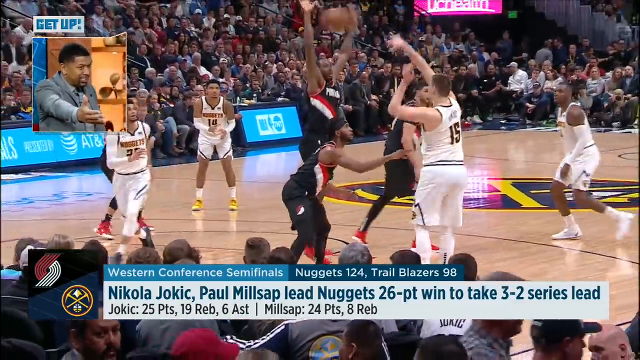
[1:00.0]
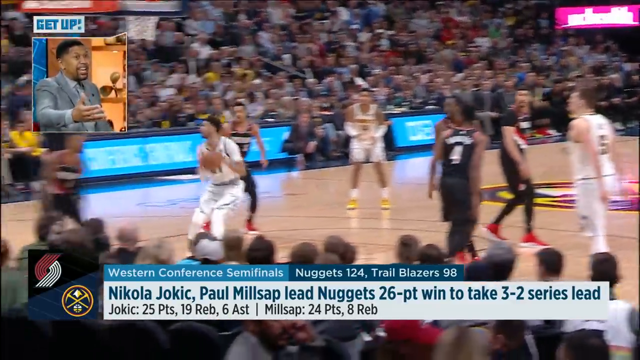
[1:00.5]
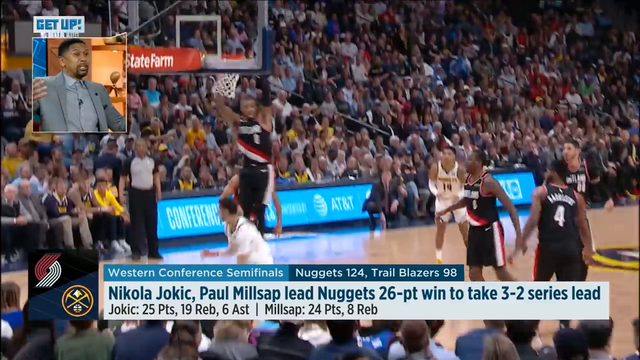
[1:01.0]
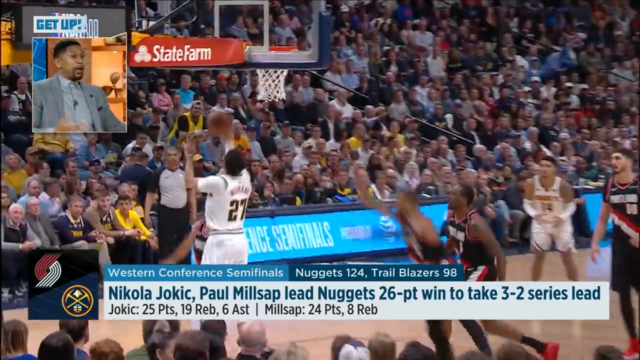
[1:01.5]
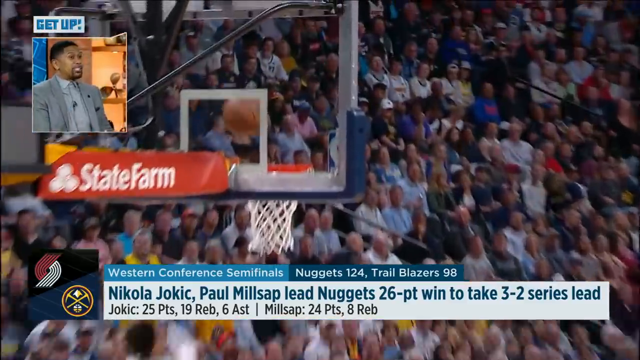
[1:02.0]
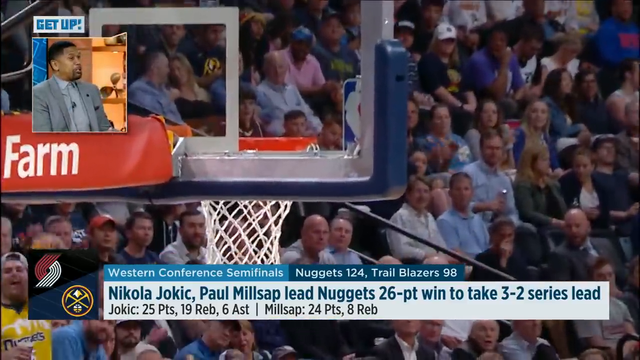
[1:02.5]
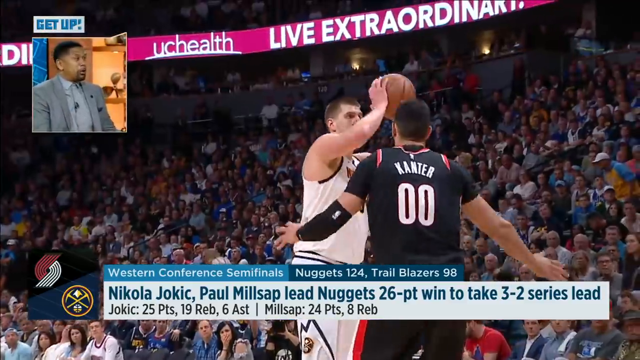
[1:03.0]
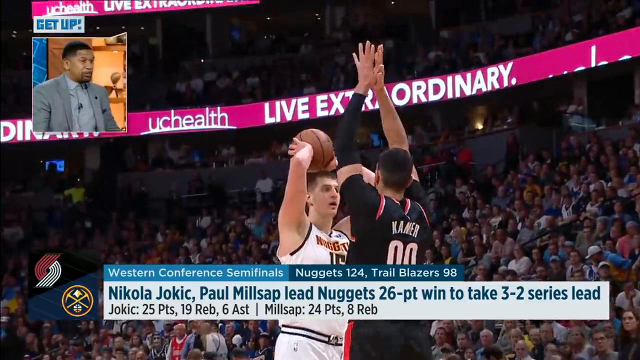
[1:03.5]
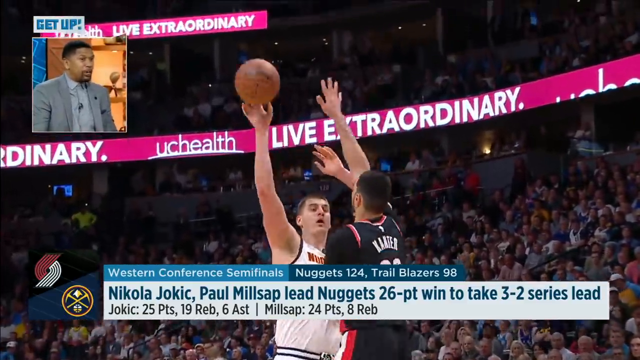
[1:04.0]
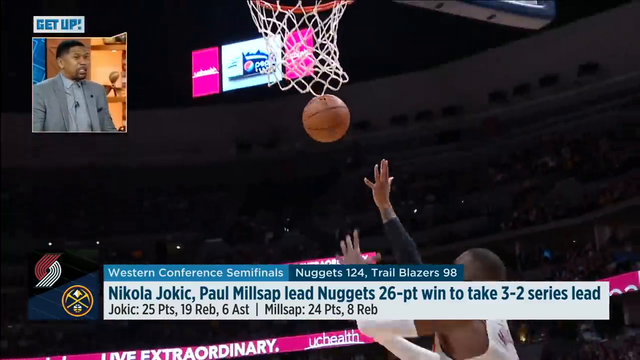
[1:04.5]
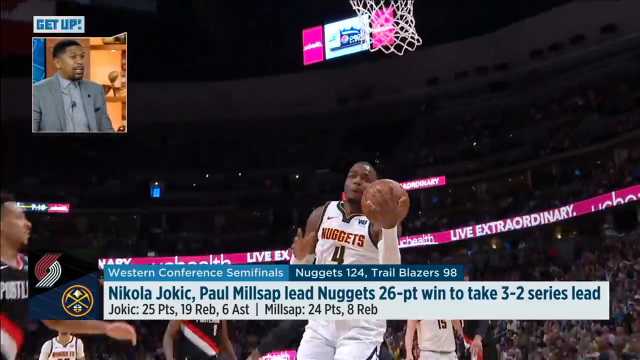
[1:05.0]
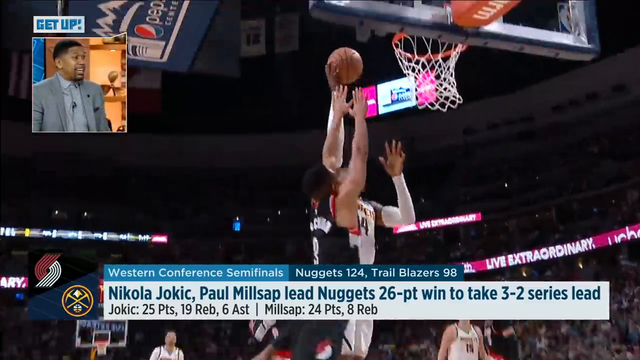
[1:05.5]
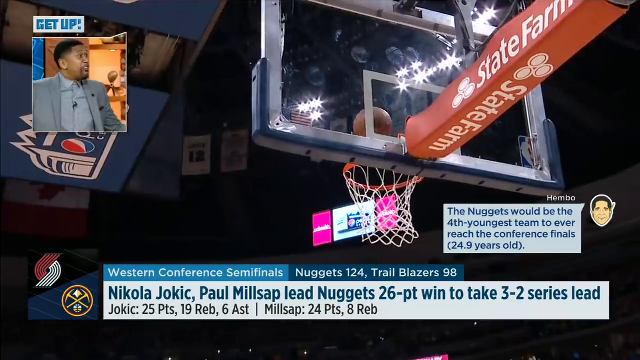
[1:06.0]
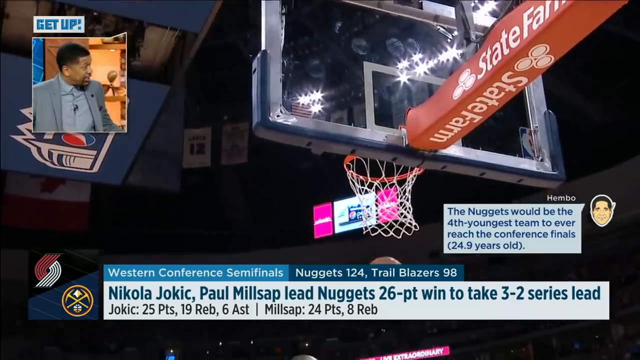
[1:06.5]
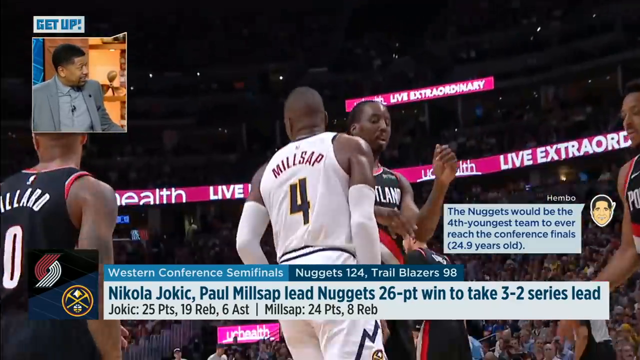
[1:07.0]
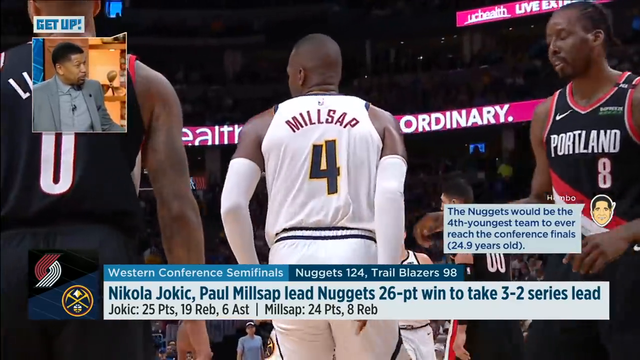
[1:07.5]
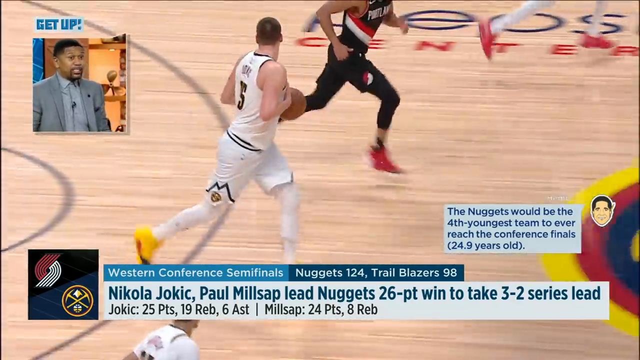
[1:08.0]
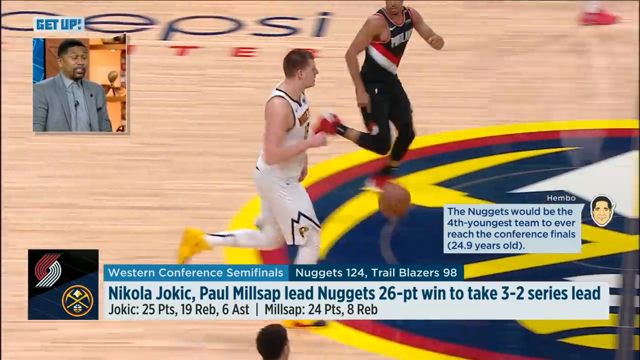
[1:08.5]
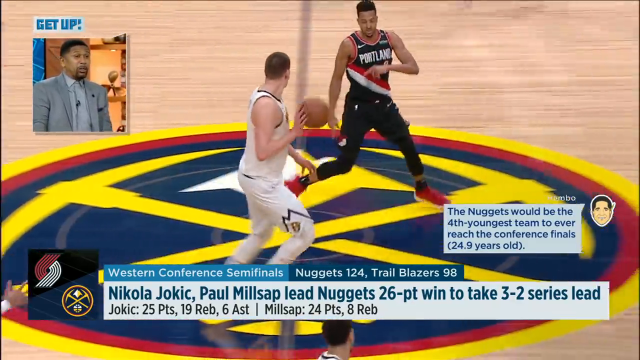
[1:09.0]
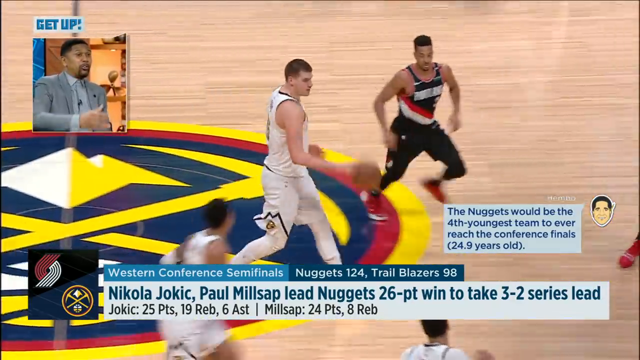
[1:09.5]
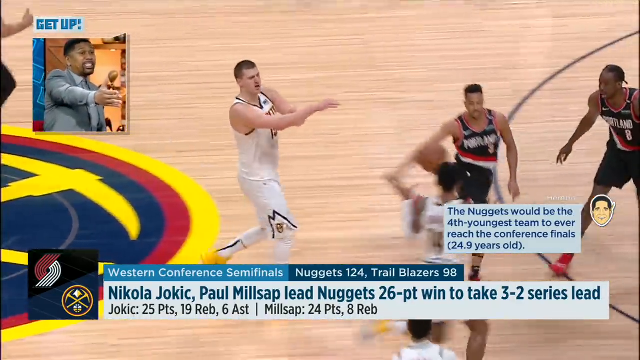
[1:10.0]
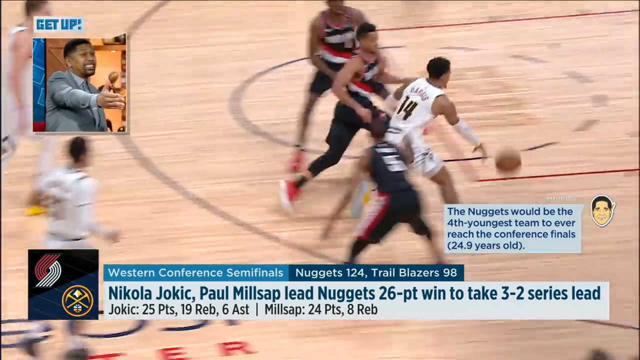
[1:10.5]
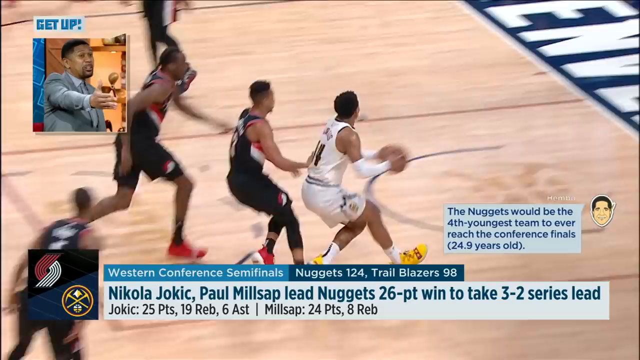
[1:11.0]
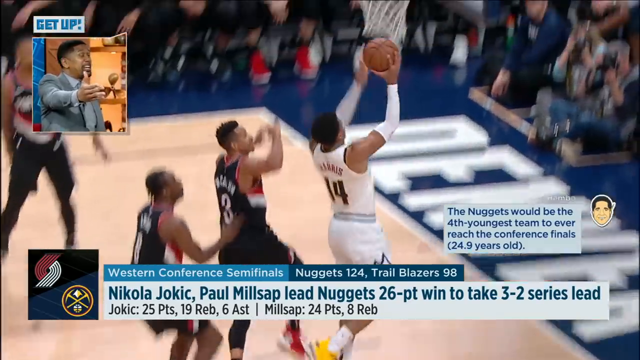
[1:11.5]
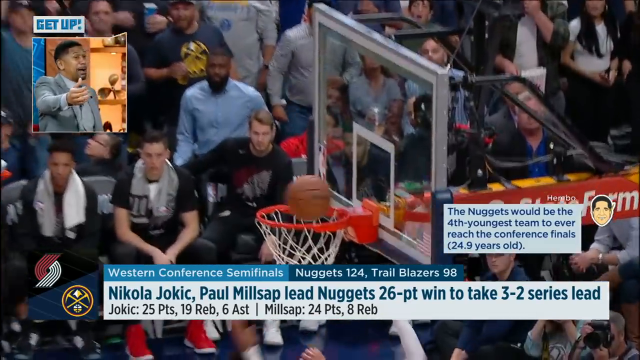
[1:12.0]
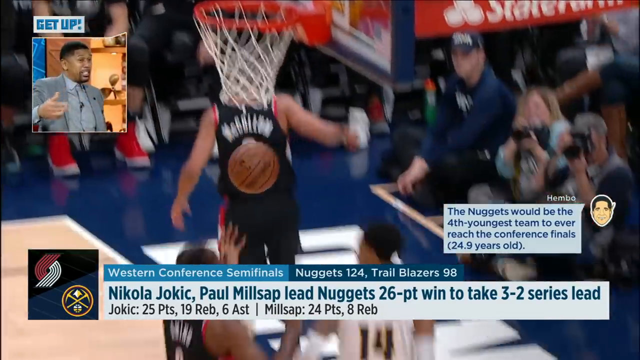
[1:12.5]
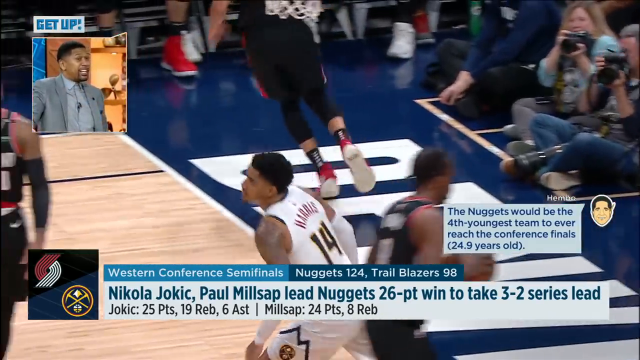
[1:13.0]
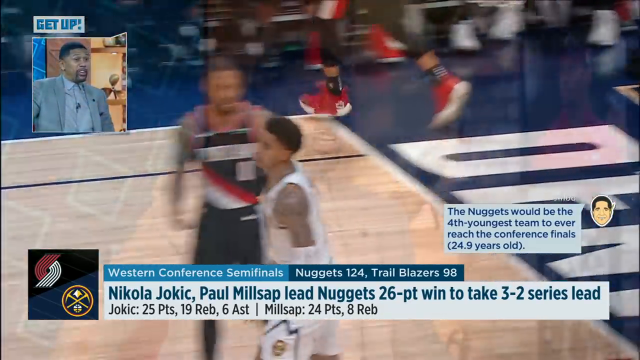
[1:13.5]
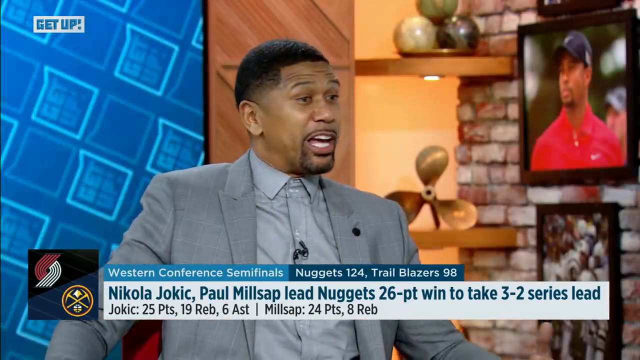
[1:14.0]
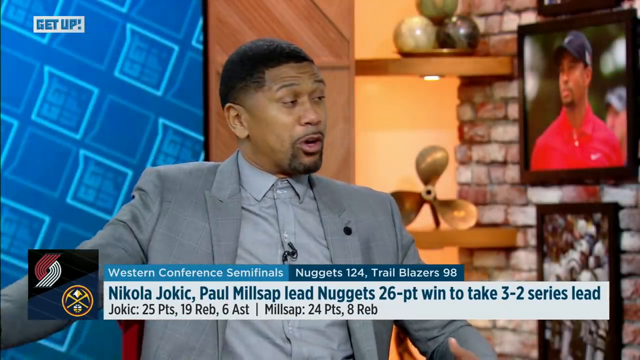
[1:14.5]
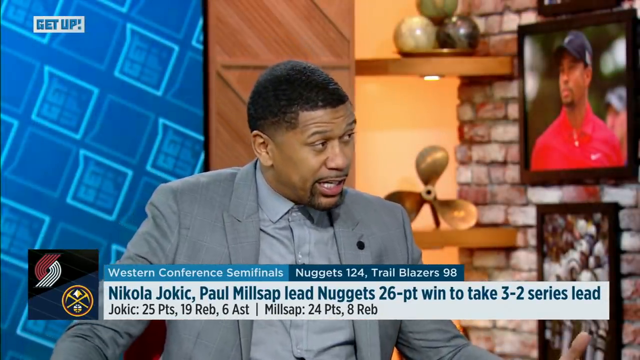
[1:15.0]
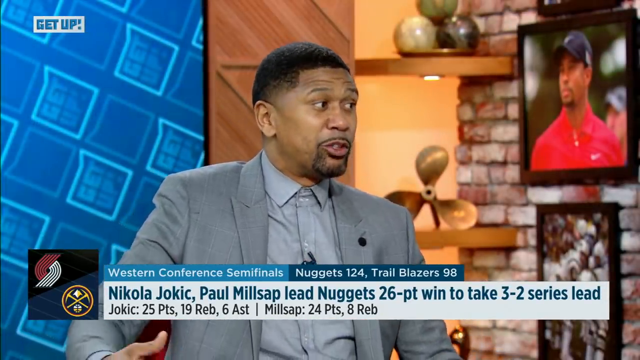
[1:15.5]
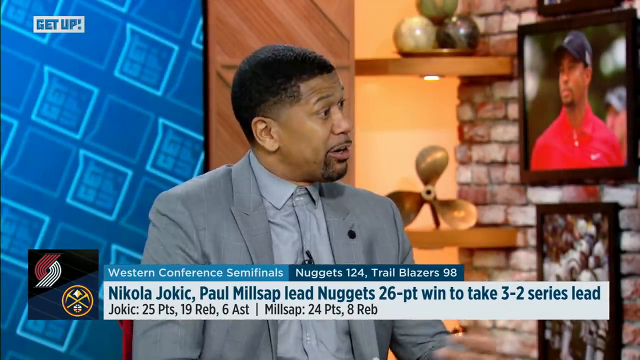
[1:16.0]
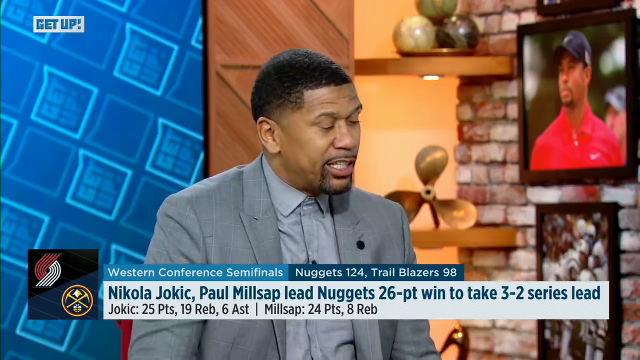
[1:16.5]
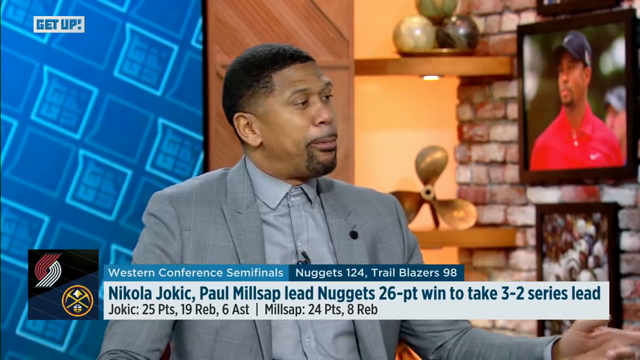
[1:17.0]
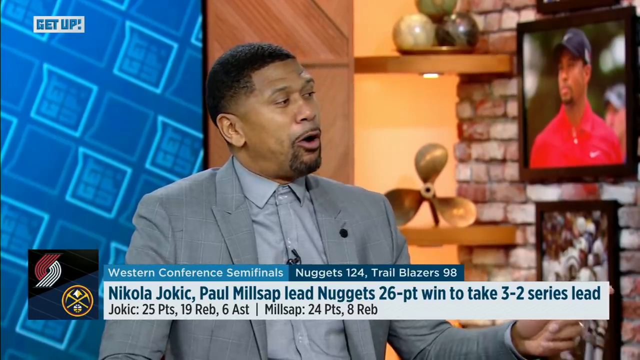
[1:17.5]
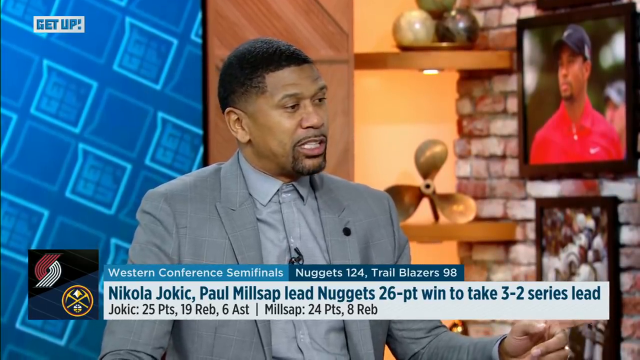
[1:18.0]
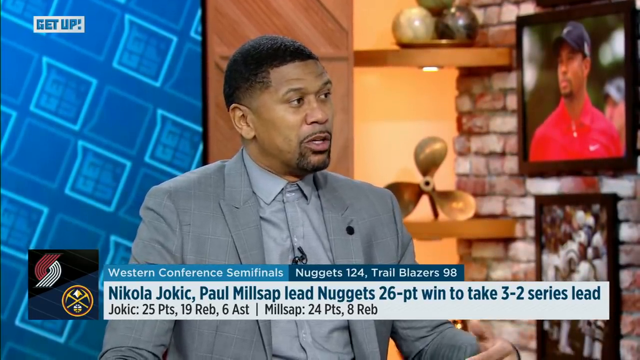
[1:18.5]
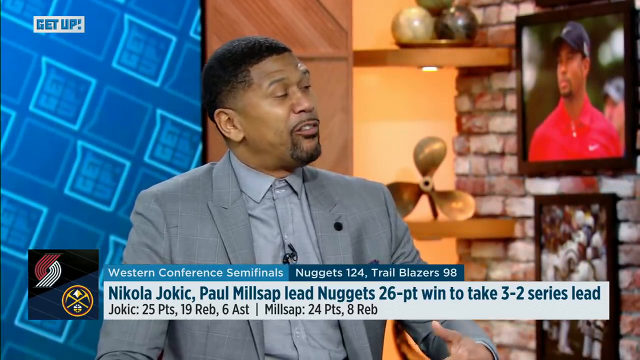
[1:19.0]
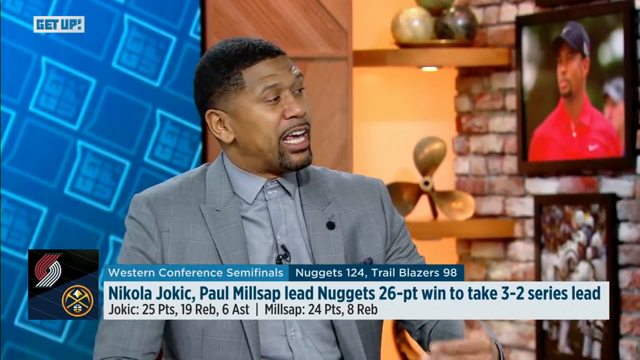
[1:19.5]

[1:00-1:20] An inset box in the top left corner shows the black man in the gray jacket and gray shirt. His right arm reaches out with palms open, as if pointing out something happening on the screen. The screen shows an action clip with text below it reading "Western Conference semifinals", "Nuggets 124, Trailblazers 98", and the headline "Nikola Jokic, Paul Millsap lead Nuggets 26-point win to take 3-2 series lead". Action shots, presumably from this game, show Millsap scoring a basket. The video then returns to the studio, where the man in the gray jacket and shirt speaks; a picture of Tiger Woods is in the top right corner. The speaker has a goatee, is quite animated and uses his arms as he speaks.